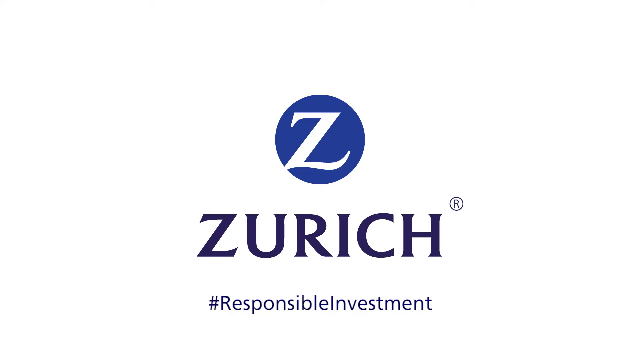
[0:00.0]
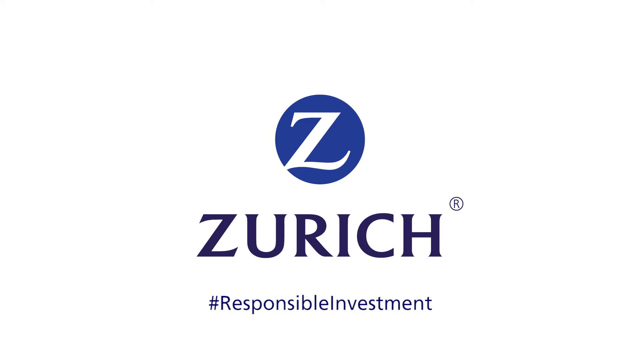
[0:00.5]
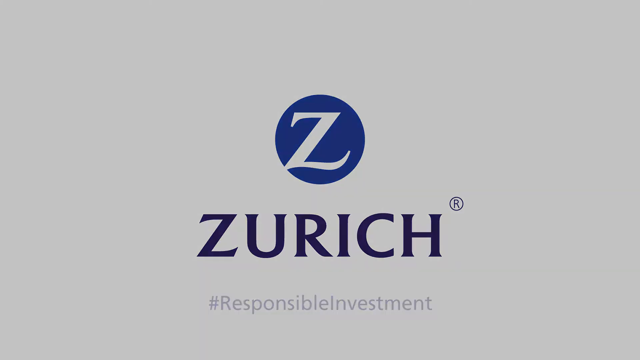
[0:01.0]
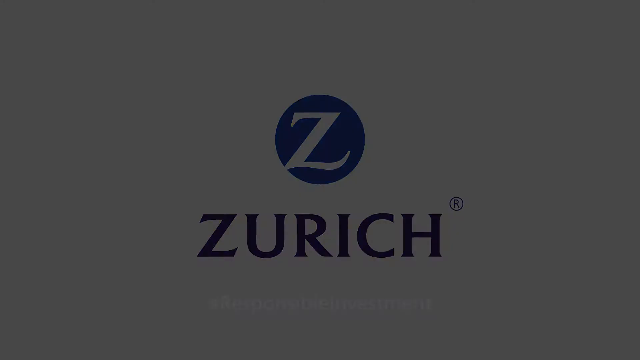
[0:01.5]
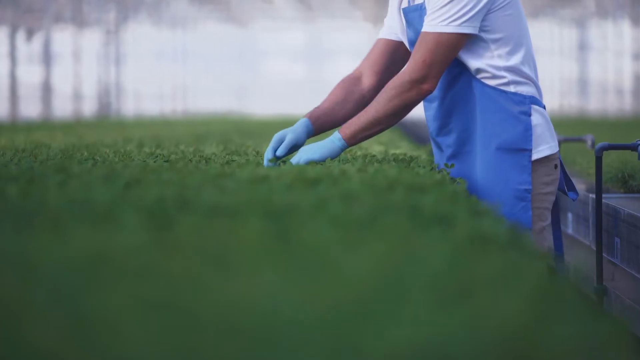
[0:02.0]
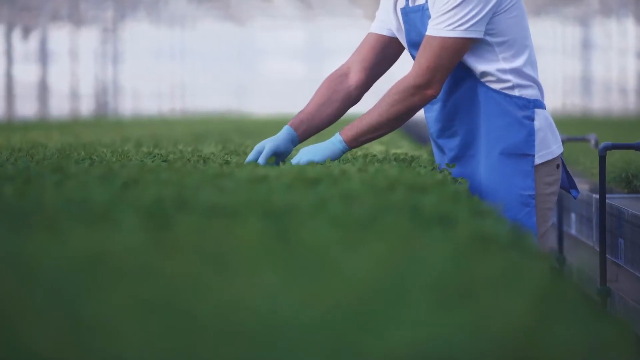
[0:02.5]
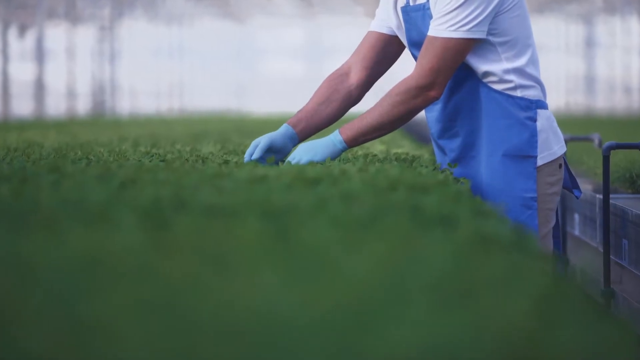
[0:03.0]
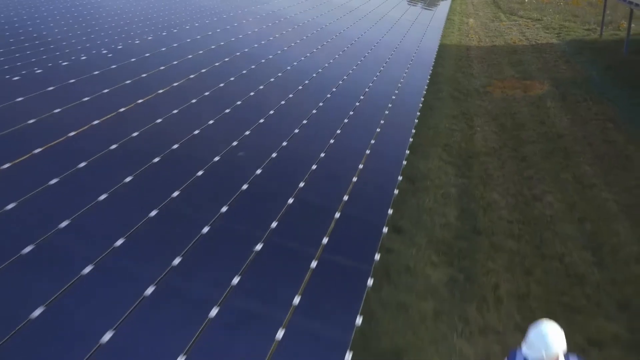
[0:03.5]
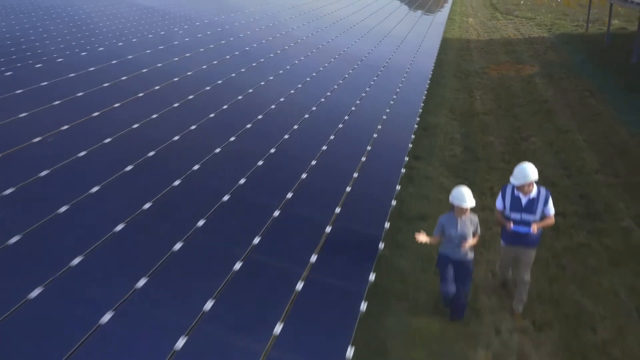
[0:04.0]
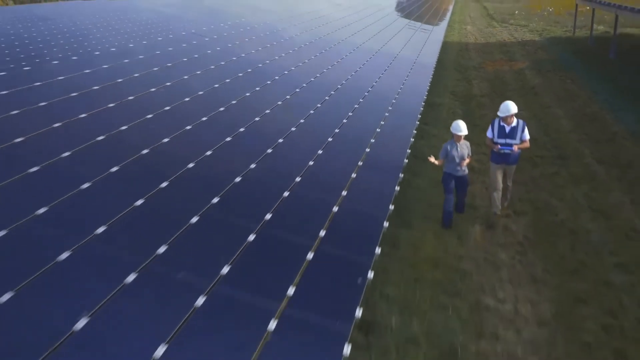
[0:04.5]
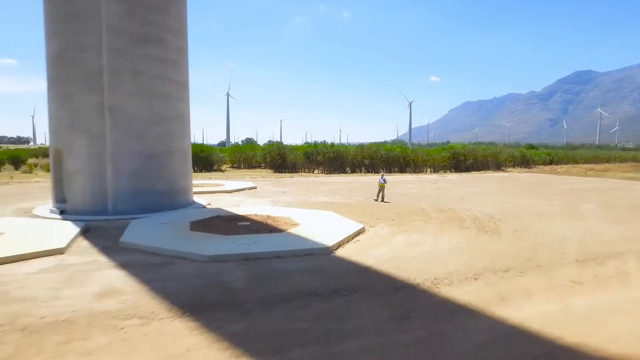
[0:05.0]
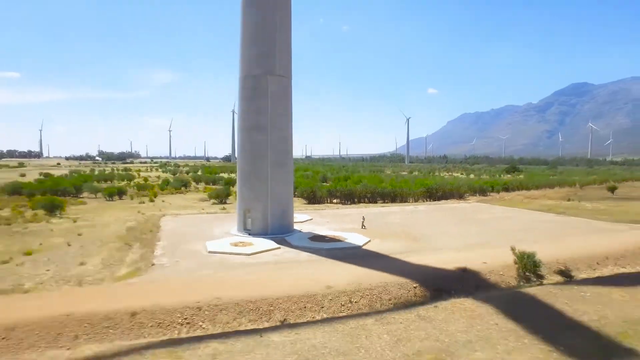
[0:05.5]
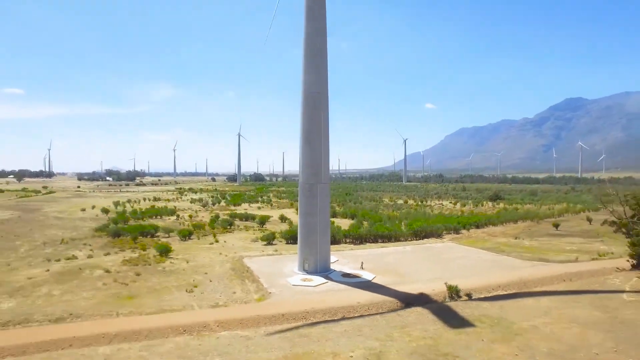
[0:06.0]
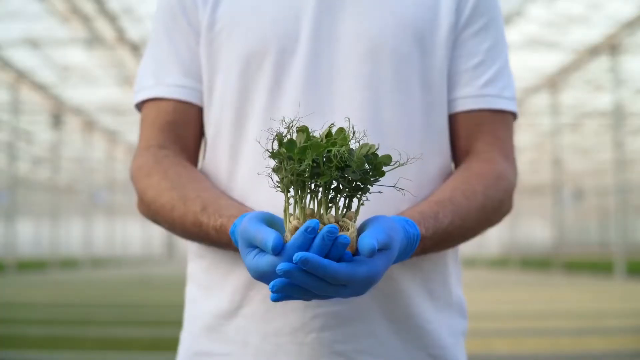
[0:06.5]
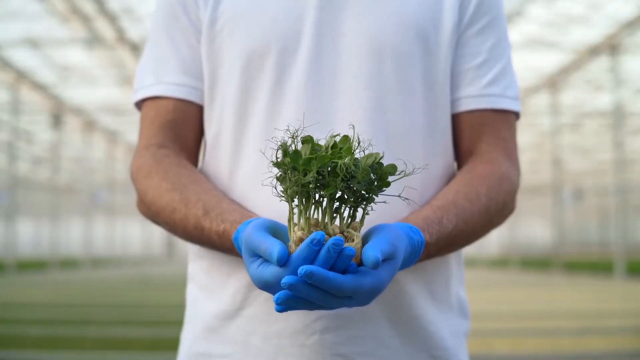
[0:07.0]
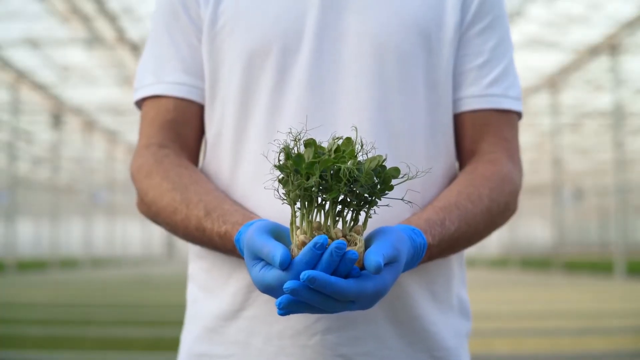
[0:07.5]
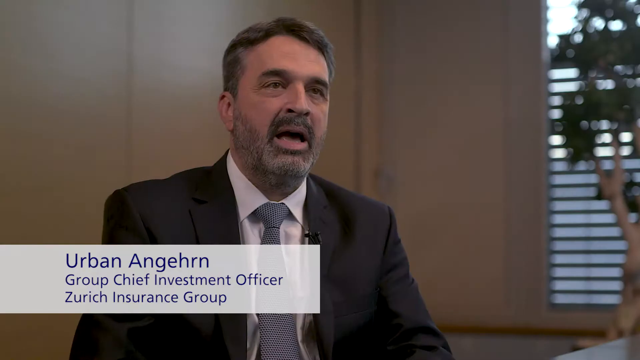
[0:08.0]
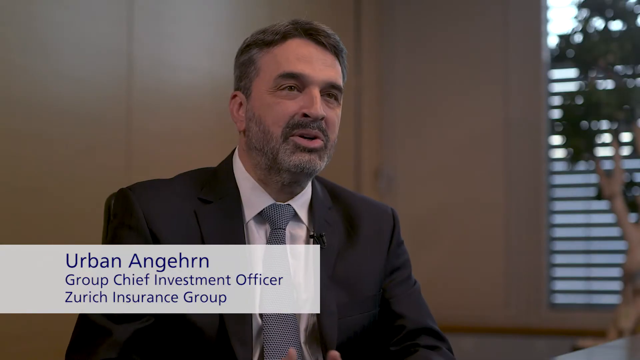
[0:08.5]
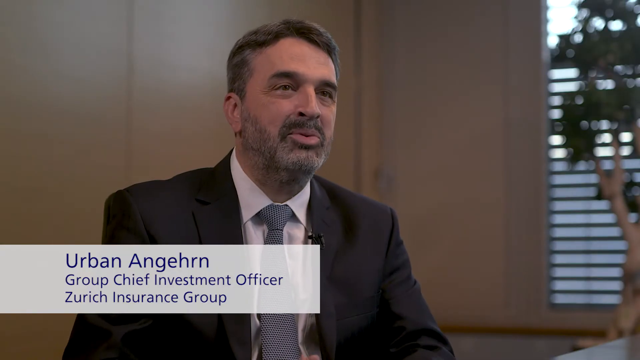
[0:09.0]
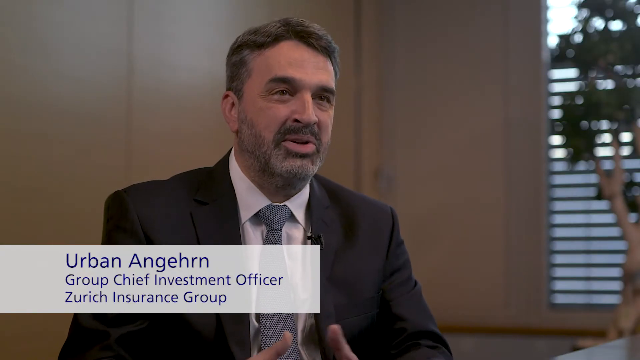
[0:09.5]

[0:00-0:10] This video is an ad for Zurich Investment. It opens on a white background with a violet circle in the middle and a white Z in the middle of the circle. Underneath, "Zurich" is written in violet, and beneath that is "#responsible investment". Next, a man is in a grow house, standing on one of its rows. It looks like an indoor grow house, like a really large greenhouse. He wears a short-sleeve white top, a blue apron, khaki pants and blue nitrile gloves. He has both arms in front of him and is bending over a bit from the waist, apparently examining the foliage of the green vegetation growing inside the greenhouse. Behind him there is a double cart. His face is never shown, only his body, arms and hands. The scene changes to a man and a woman walking on green grass on the outskirts of the property; on the left side of the frame, next to them, there may be some solar panels. They talk to each other, and both have their right leg lifted, mid-step forward. Both wear white safety caps as they walk along the top and look at each other. Next, the view apparently looks out at a large stone column, with a mountainside on the horizon. The sky is blue and basically clear, and the column casts a shadow. Then the man from the grow house stands in the middle of the frame with his upper arms at his sides and both arms bent at the elbow. His right hand is cupped over his left, and in the cup of his hands he holds a bundle of green herbs that look bunched together, with a root wrapping around them.